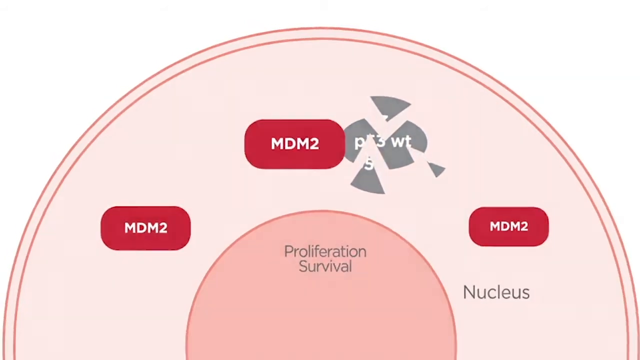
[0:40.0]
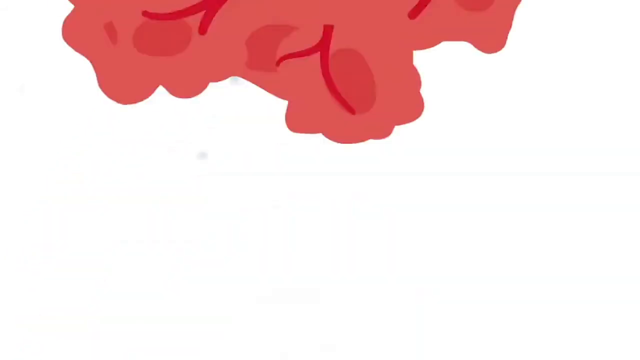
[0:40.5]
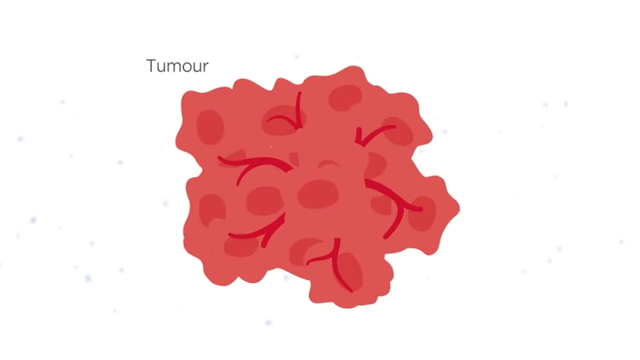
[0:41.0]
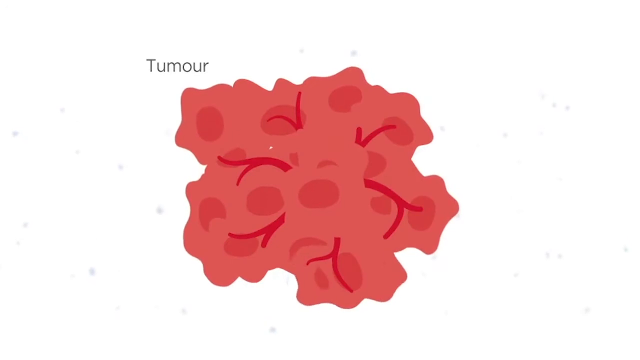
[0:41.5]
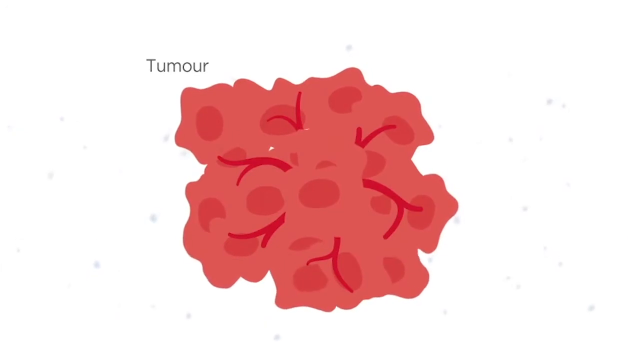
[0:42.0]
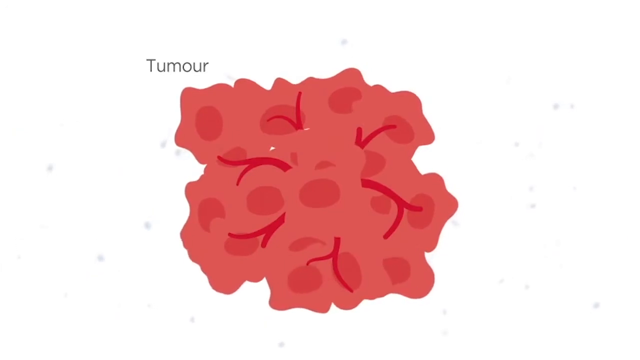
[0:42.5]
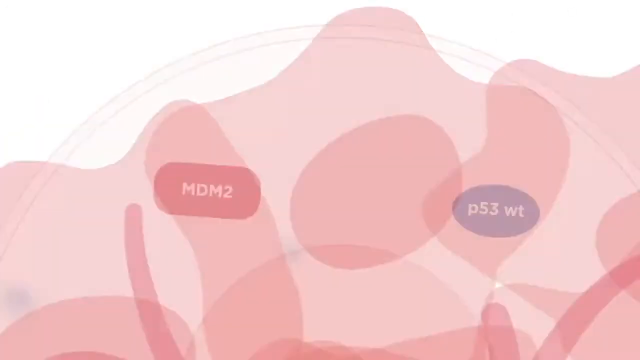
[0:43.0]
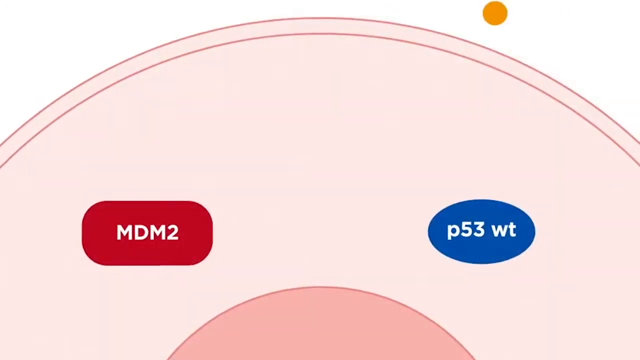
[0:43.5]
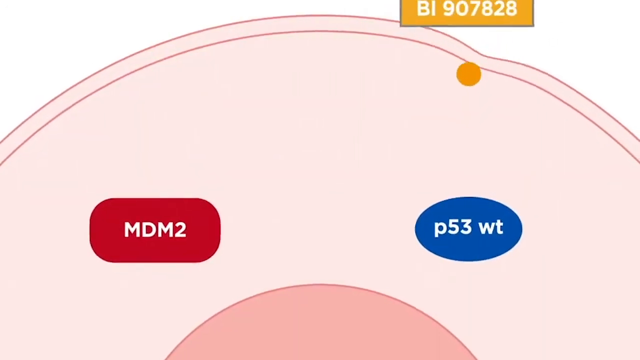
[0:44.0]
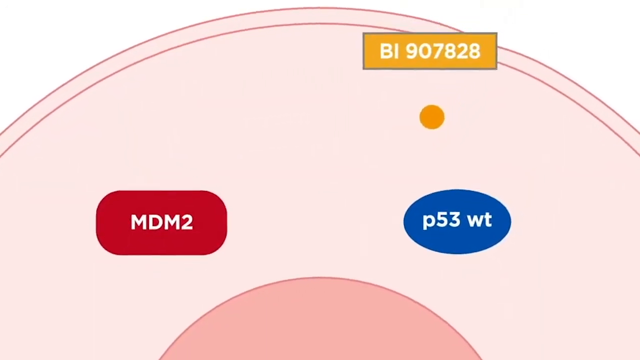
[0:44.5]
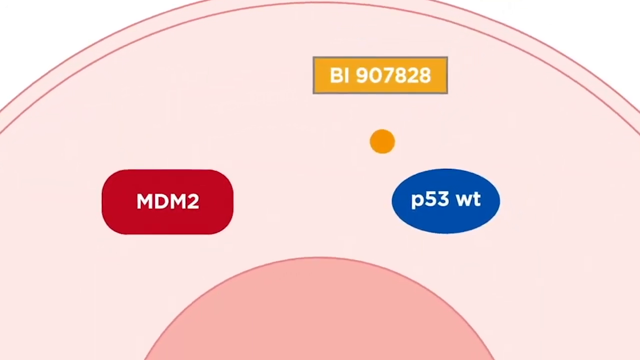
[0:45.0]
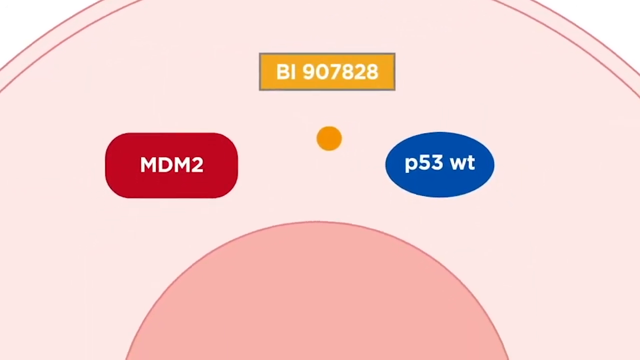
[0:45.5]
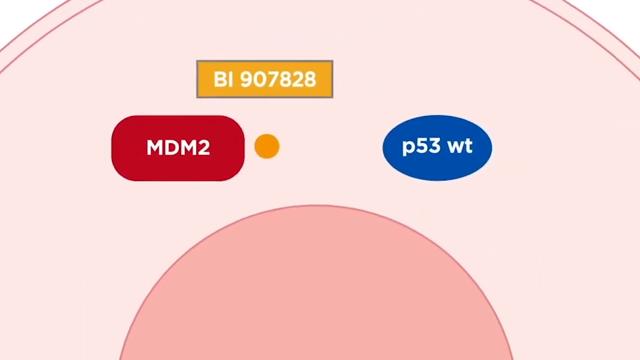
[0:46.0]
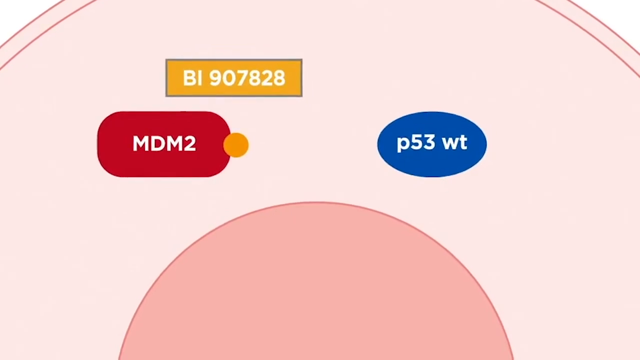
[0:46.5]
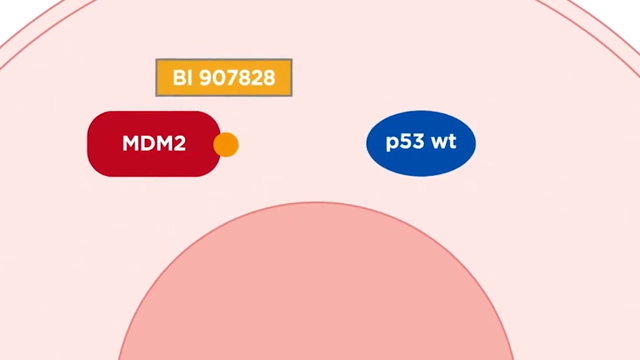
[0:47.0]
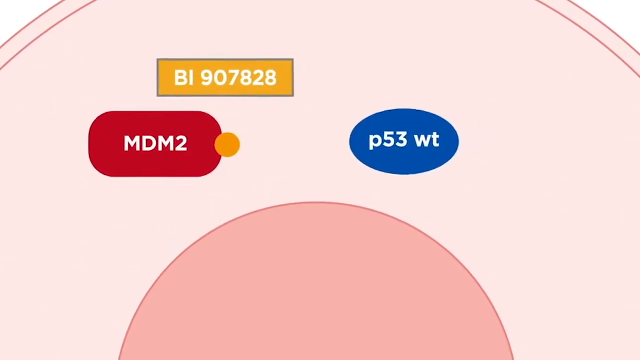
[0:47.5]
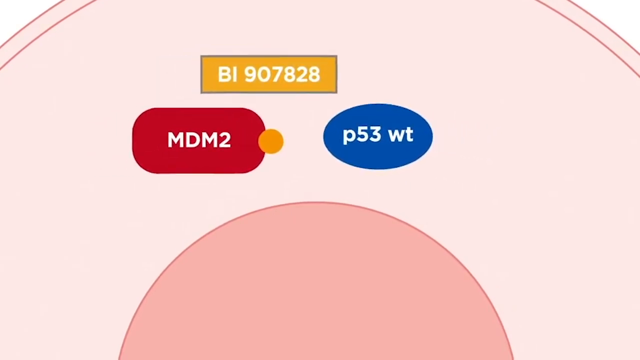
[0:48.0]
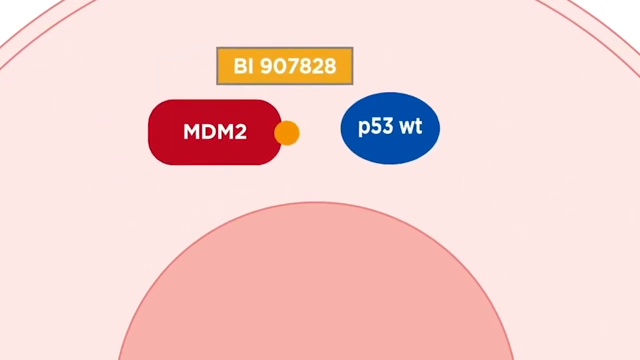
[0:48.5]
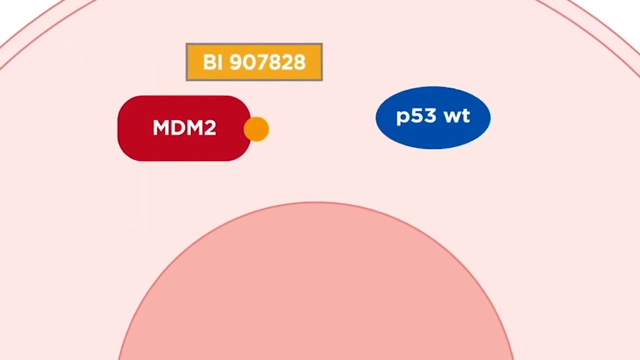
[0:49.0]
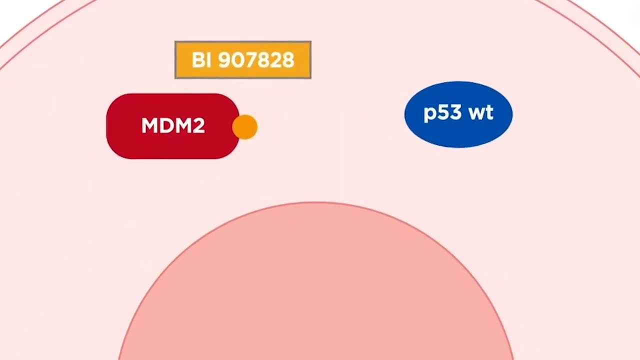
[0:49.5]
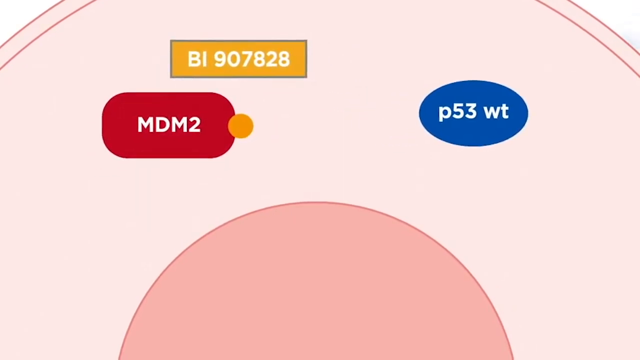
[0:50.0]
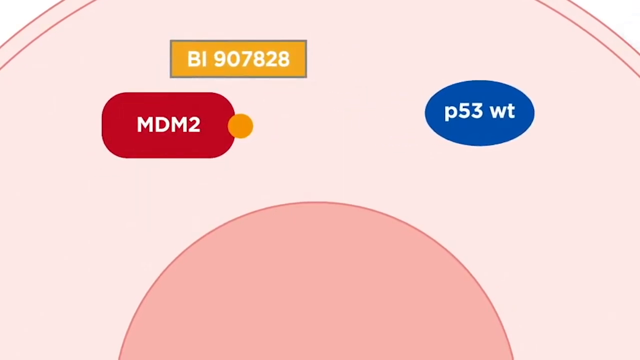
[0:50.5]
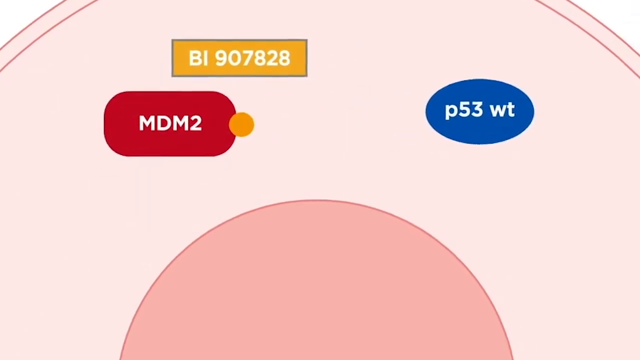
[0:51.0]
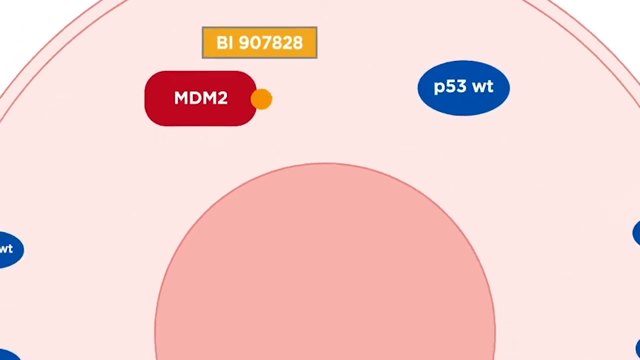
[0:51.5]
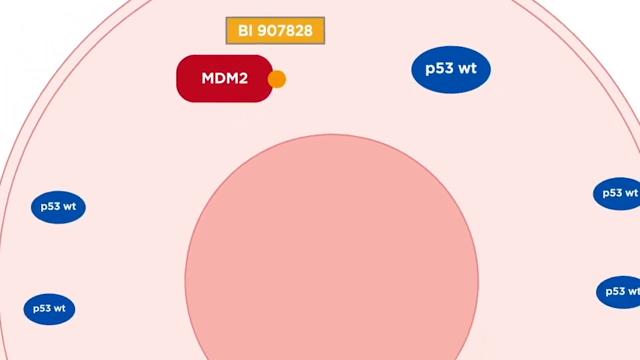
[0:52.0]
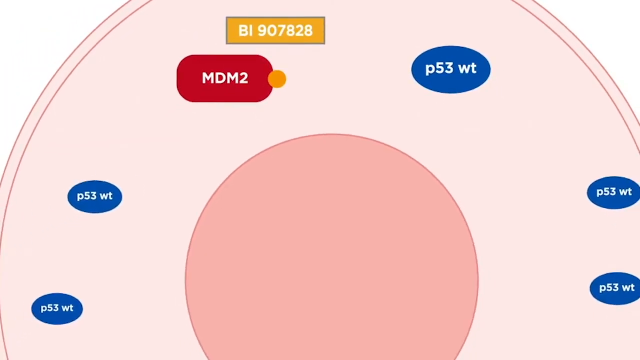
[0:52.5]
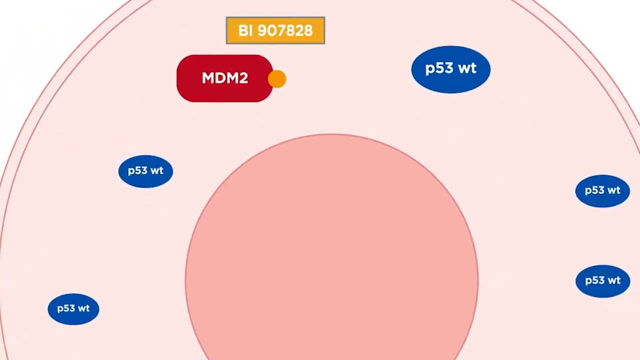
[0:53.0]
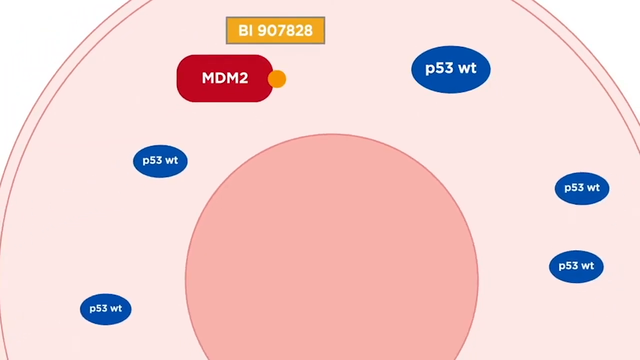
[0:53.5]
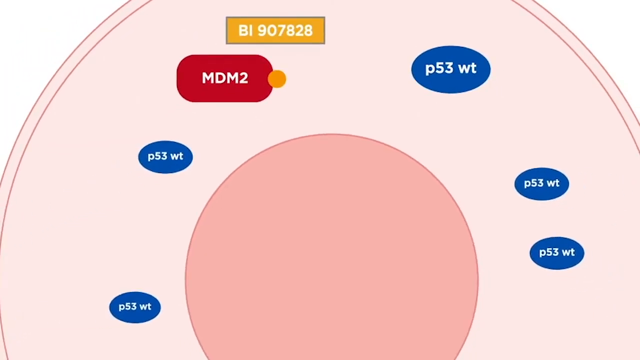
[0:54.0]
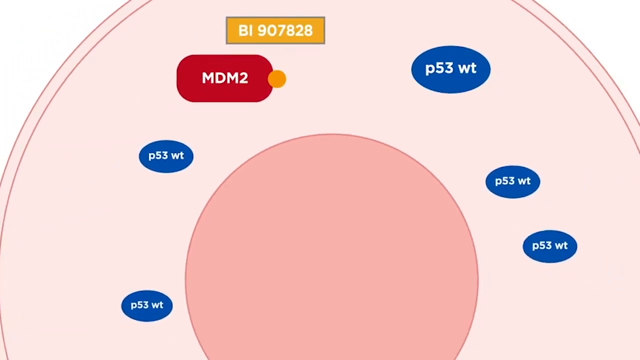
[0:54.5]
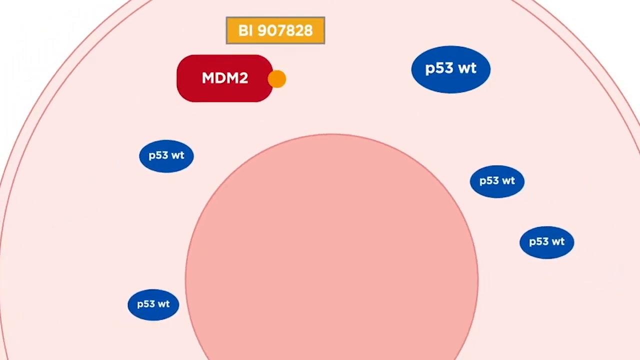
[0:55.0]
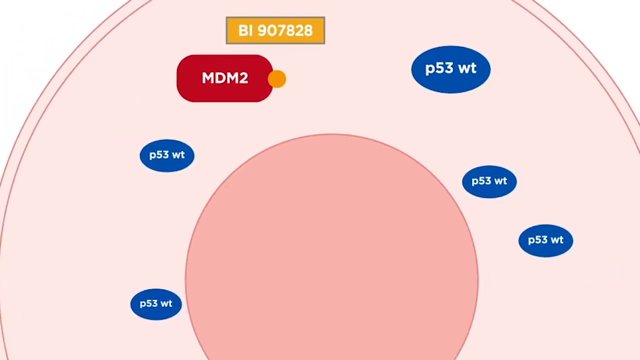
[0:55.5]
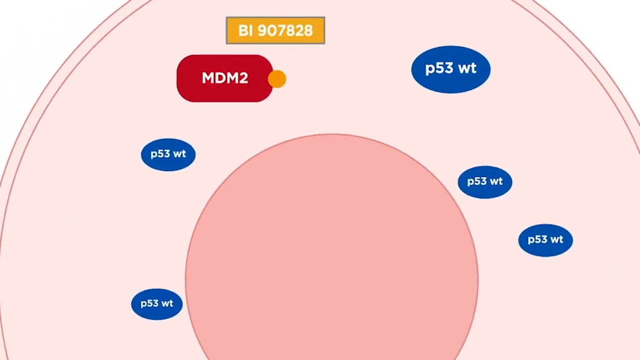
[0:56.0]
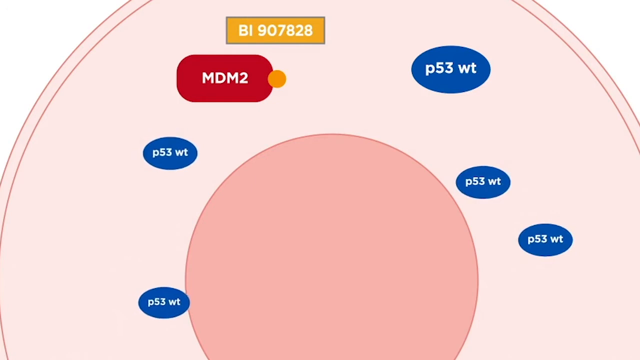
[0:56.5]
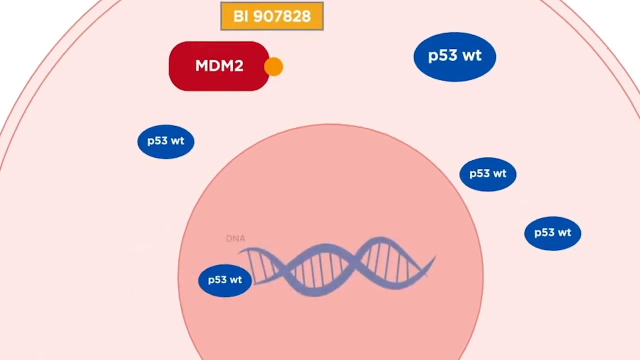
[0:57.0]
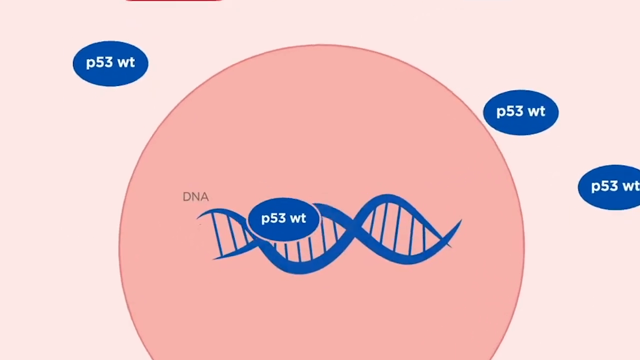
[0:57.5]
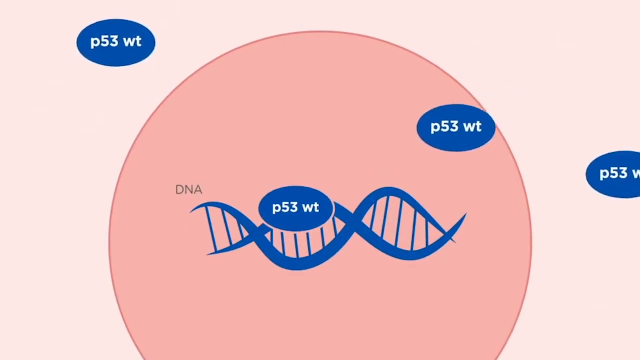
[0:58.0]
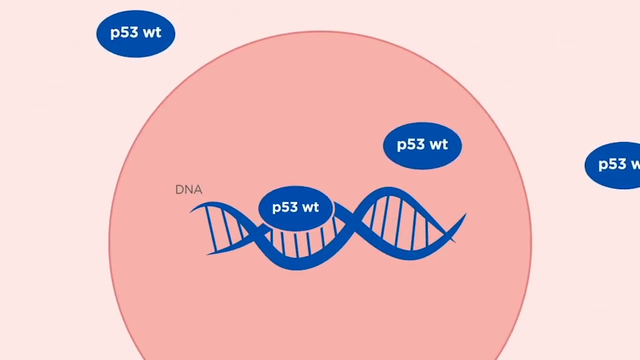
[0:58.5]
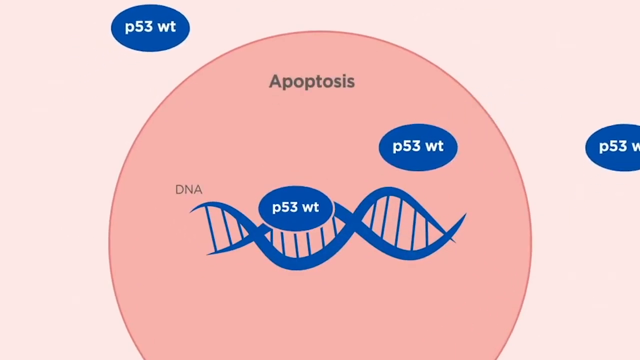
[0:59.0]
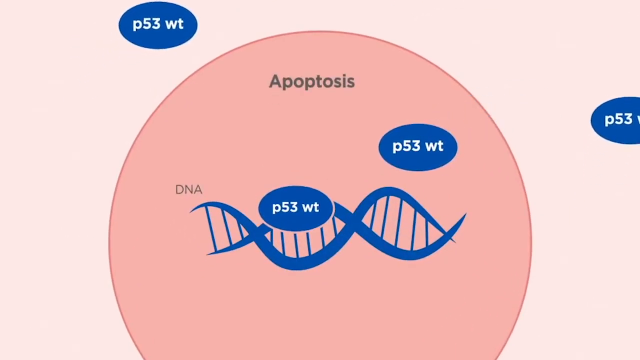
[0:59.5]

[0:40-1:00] A round object and a red cell with wiggly sides appear, showing an uneven outer surface. A very large picture of a cell follows, with a small orange-yellowish dot labeled "BI907828" in lettering inside a mustard-colored rectangle. MDM2 and P53 are also shown, with P53 now blue. The small orange cell attaches to MDM2, and P53 bumps into it. The rest of the cells seem to gravitate toward the middle, all congregating in the middle of this one cell. A close-up shows the tumorous cell, which has shaded areas inside, and its outside looks like broccoli, very undefined, clearly distinguishable from a normal cell.